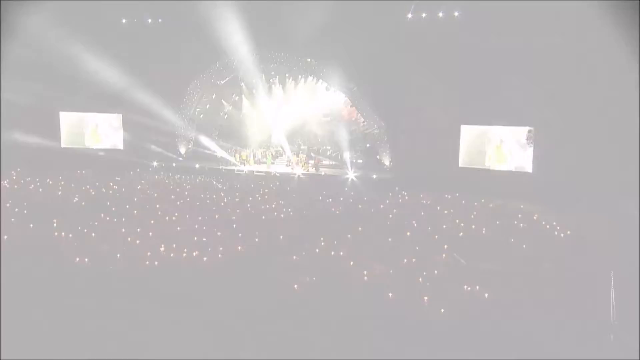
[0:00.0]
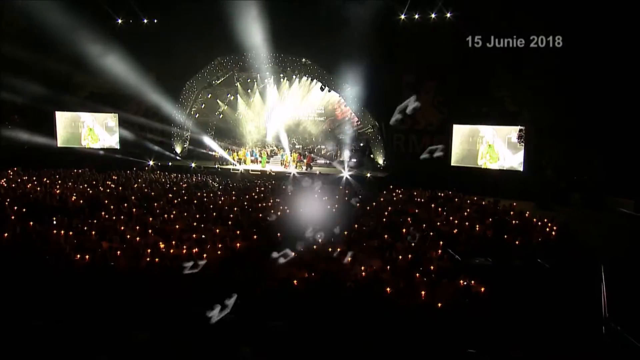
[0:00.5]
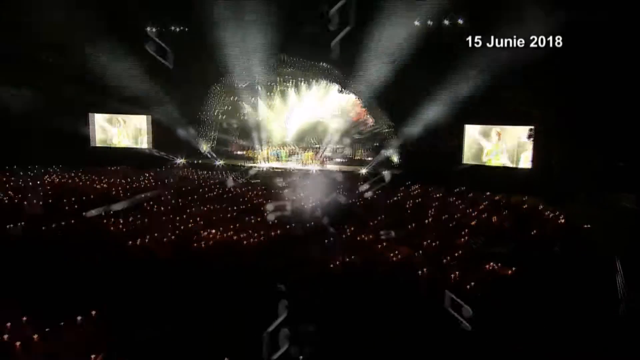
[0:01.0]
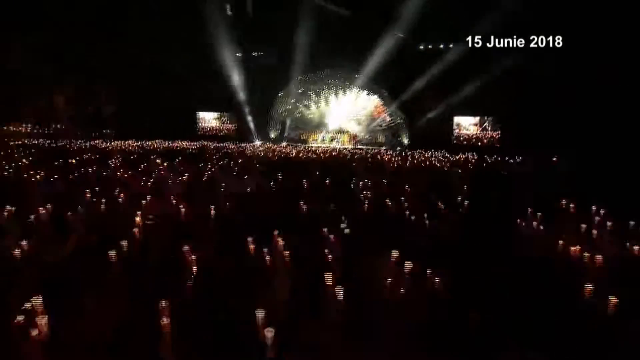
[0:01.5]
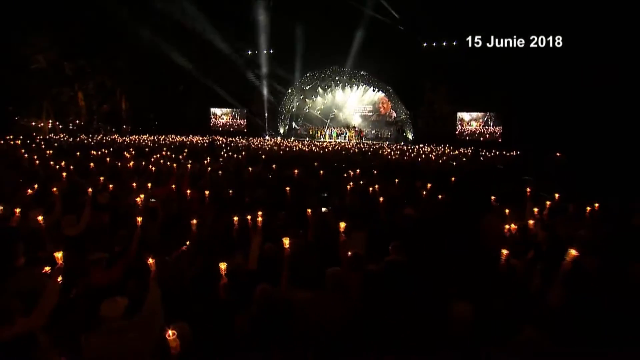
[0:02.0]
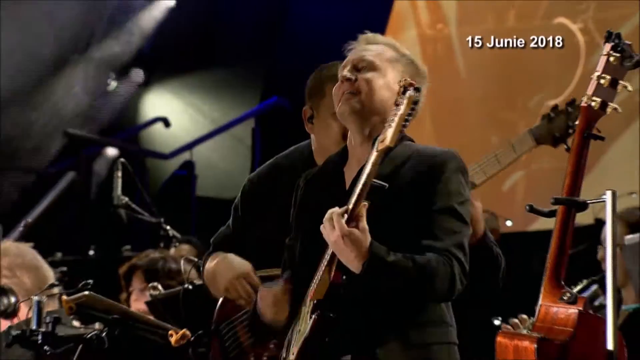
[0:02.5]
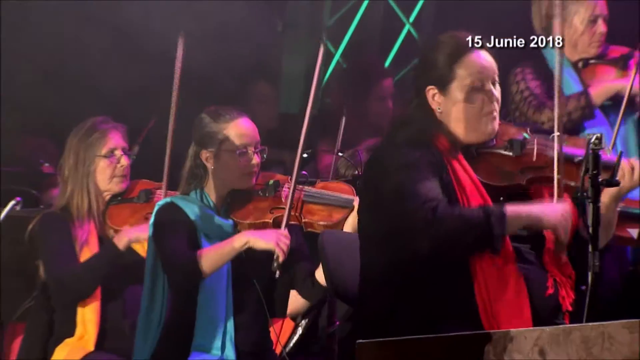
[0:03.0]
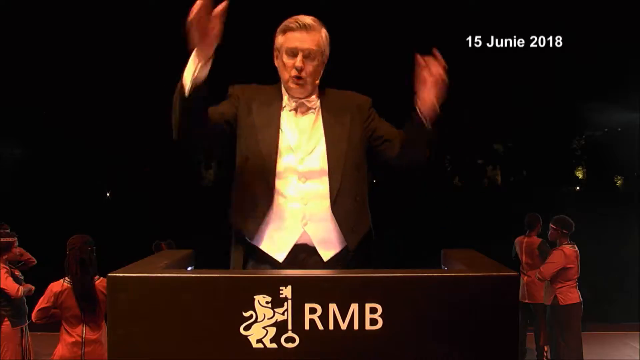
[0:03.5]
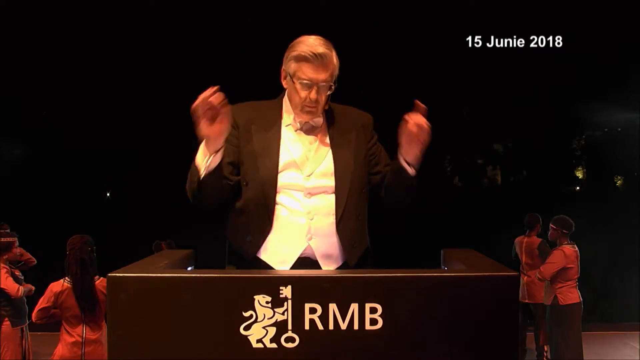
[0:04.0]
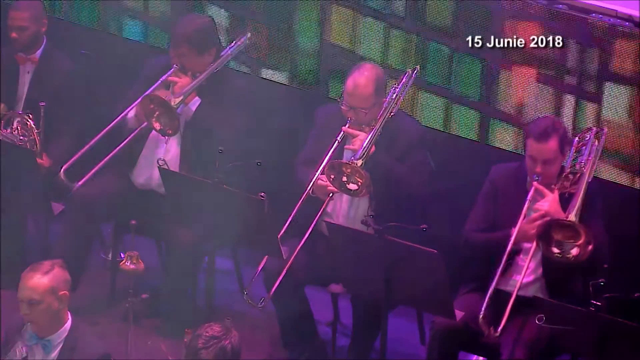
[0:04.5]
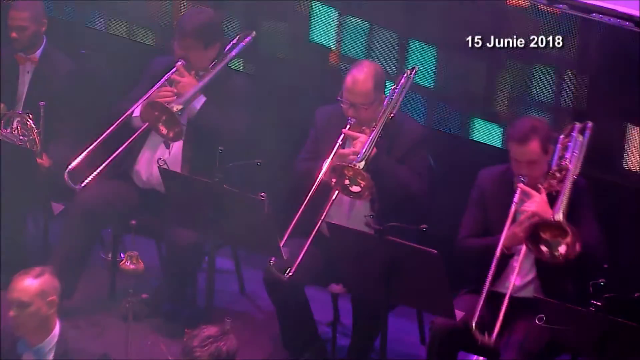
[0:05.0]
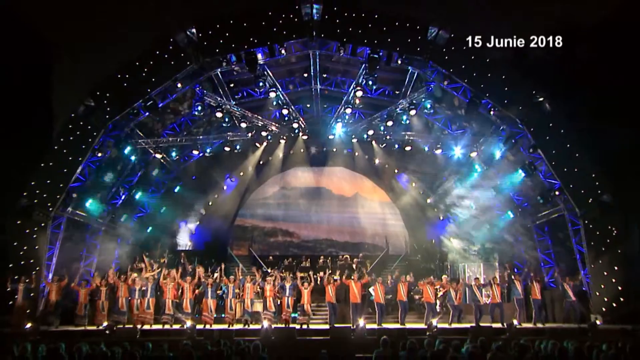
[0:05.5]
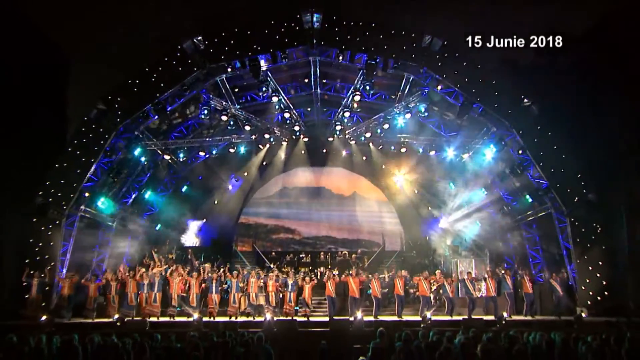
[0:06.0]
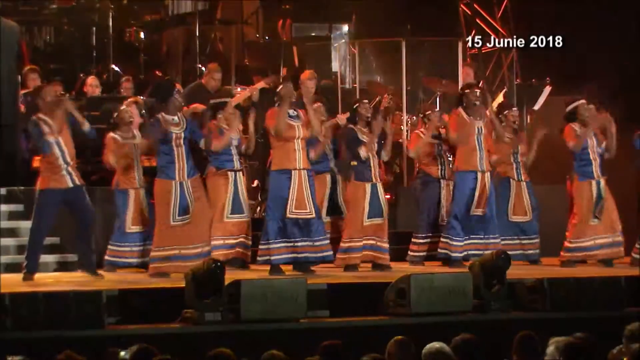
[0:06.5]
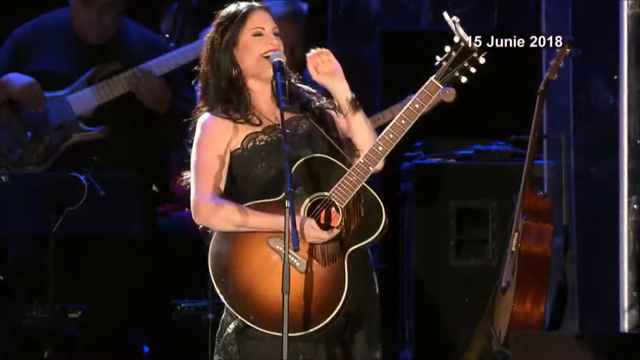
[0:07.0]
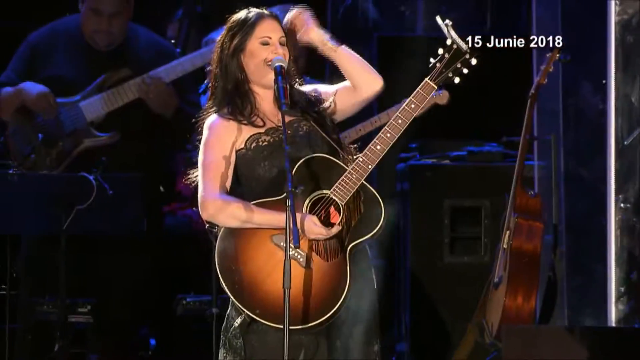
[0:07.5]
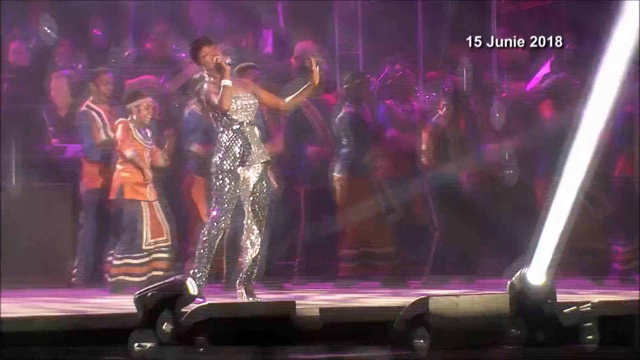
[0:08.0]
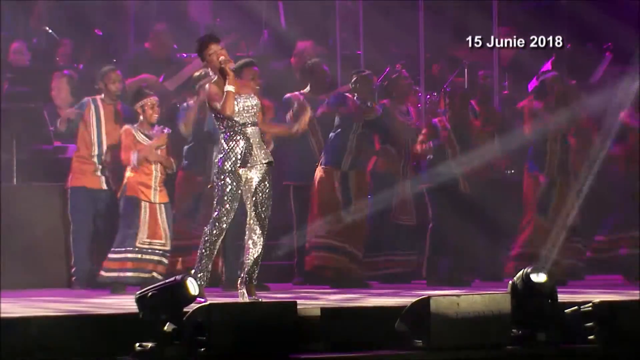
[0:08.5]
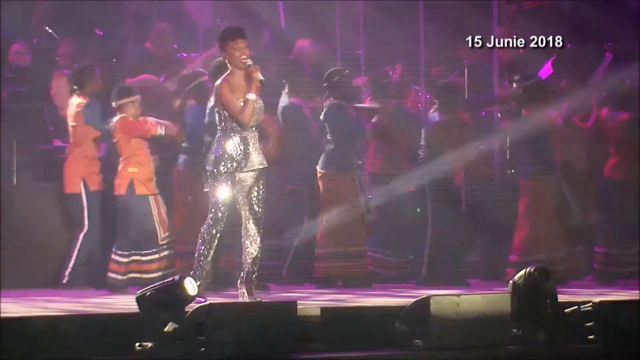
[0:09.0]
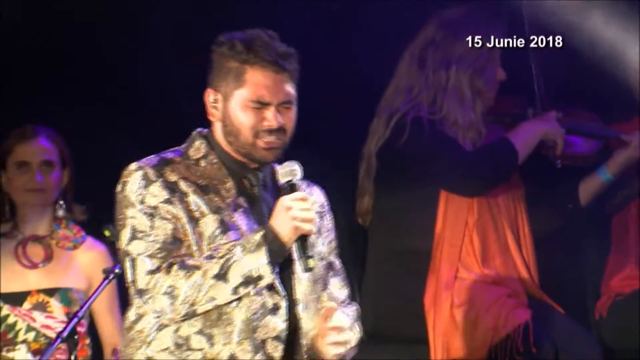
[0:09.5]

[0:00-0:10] The video opens on a grey screen with what appears to be a concert taking place behind it. The greyness coalesces into a central grey point in the centre of the screen, from which animated graphics of notes start zooming out. This fades, leaving a shot of the concert moving back away and to the right, with white writing in the top right-hand corner that says "15 Junie 2018". A cut shows the performers on stage, focused on a male guitarist dressed in black, followed by a shot of the string section showing three women in black wearing scarves. A quick cut shows the conductor behind the podium, looking straight at the camera; the podium has a symbol at the bottom of a lion holding a key and the letters "RMB". Next comes a shot from high above of the brass section, with three male saxophonists playing. A shot looks directly up at the stage from the centre of the crowd, showing a line of people at the front of the stage and the big archway above. A close-up shows those people dancing, wearing orange and blue. Then a female guitarist in black appears on stage, followed by a black female singer in silver in front of the dancing people in orange and blue. The last shot shows a male singer in a silver suit.